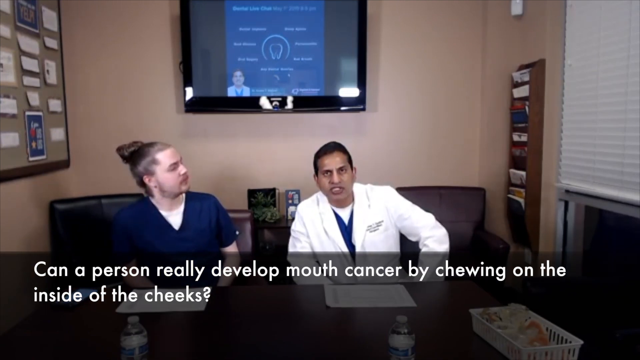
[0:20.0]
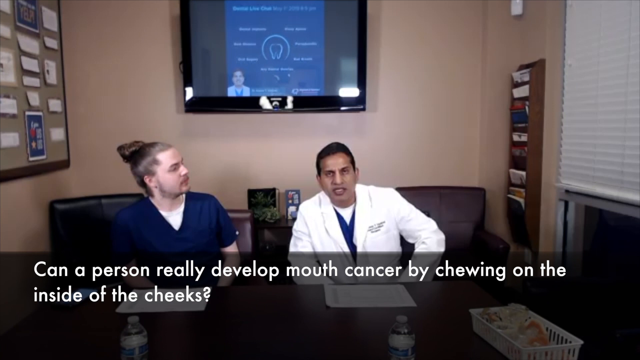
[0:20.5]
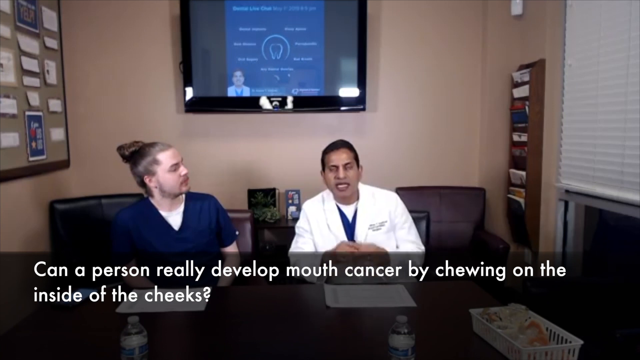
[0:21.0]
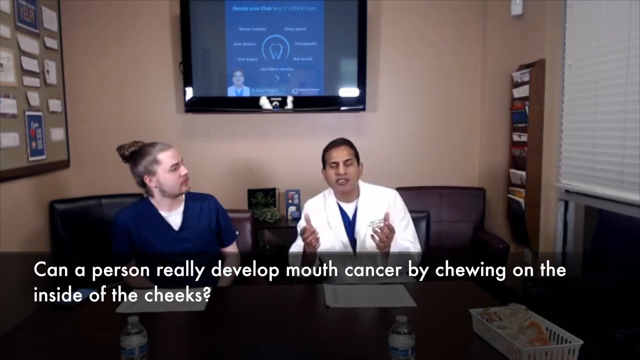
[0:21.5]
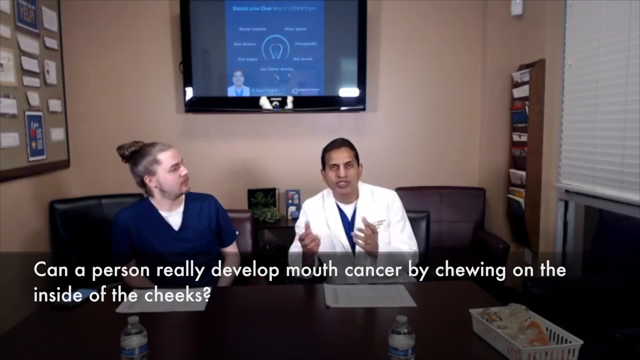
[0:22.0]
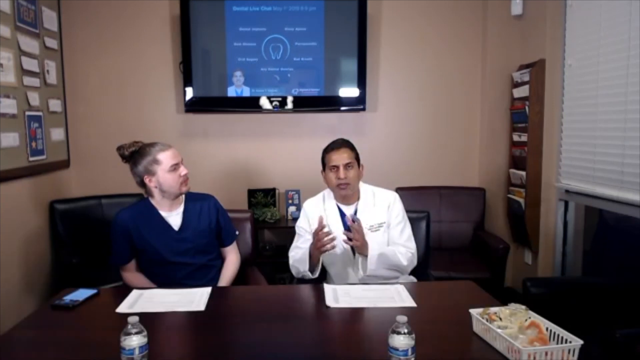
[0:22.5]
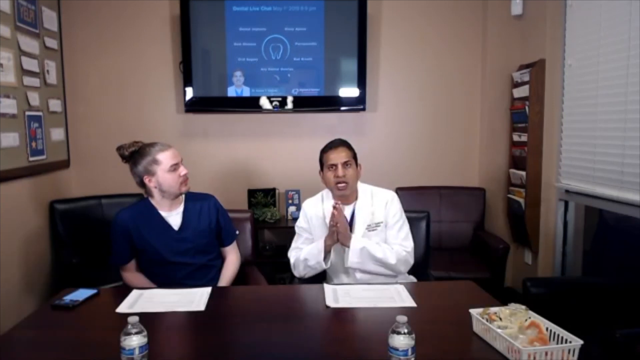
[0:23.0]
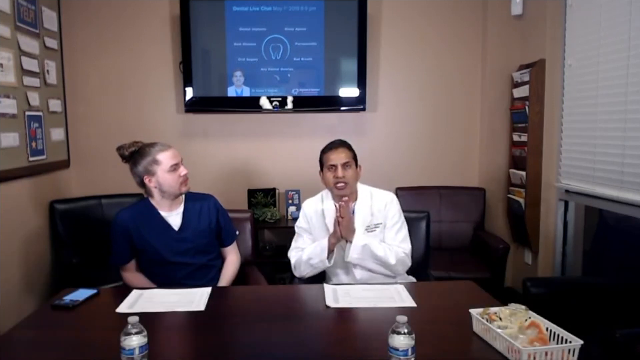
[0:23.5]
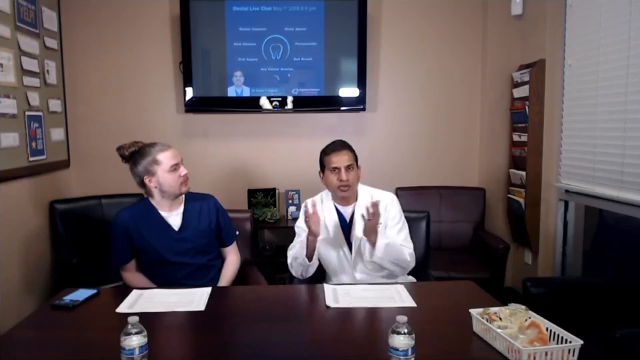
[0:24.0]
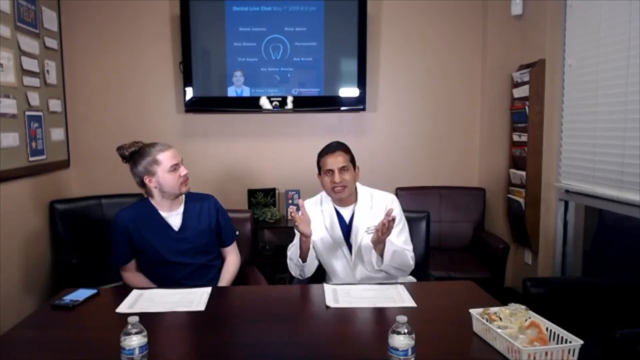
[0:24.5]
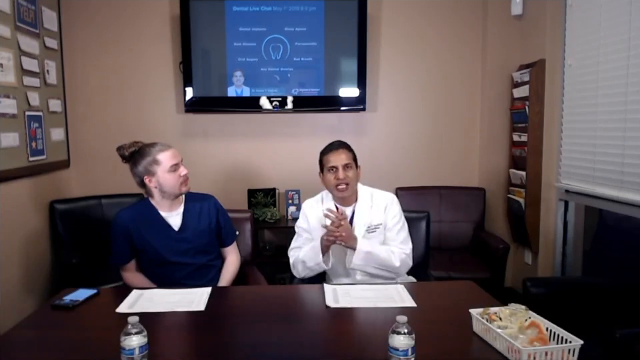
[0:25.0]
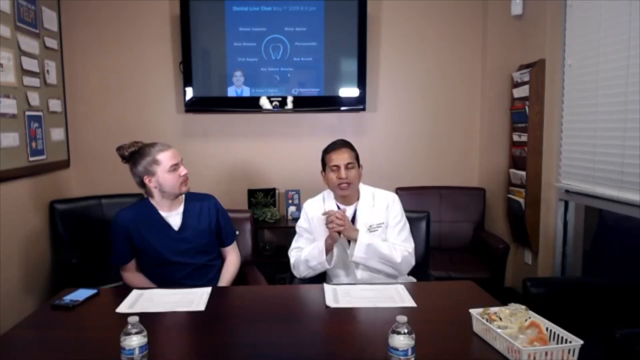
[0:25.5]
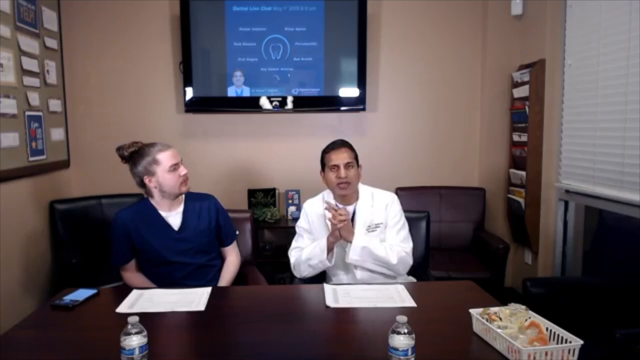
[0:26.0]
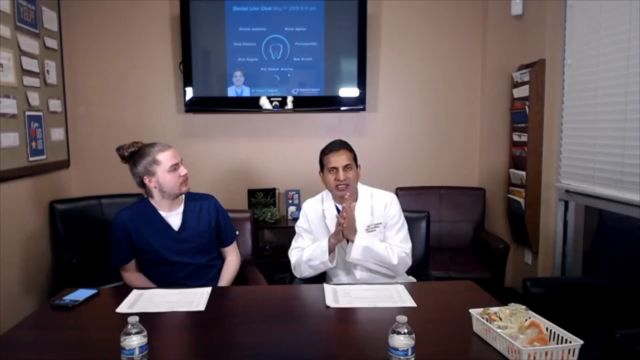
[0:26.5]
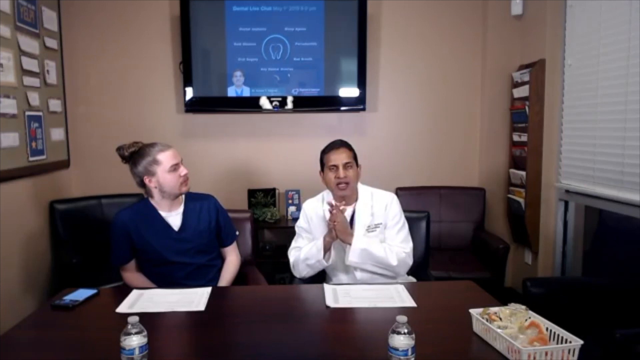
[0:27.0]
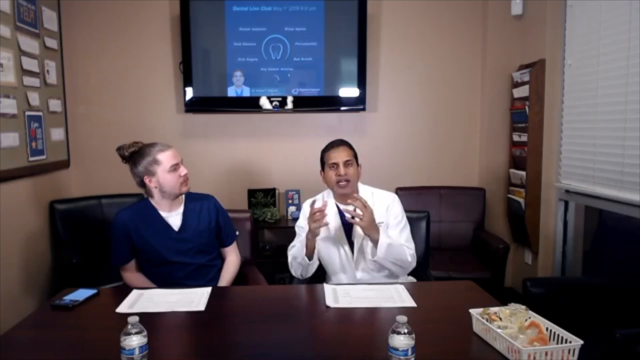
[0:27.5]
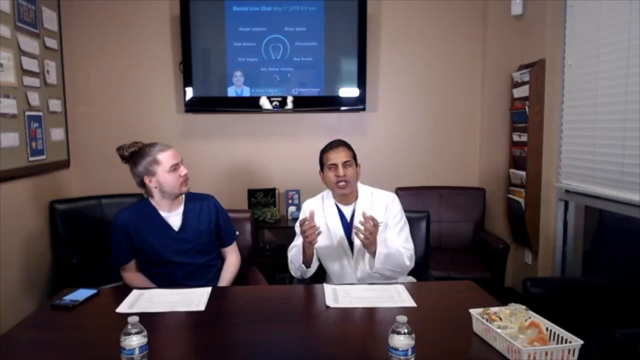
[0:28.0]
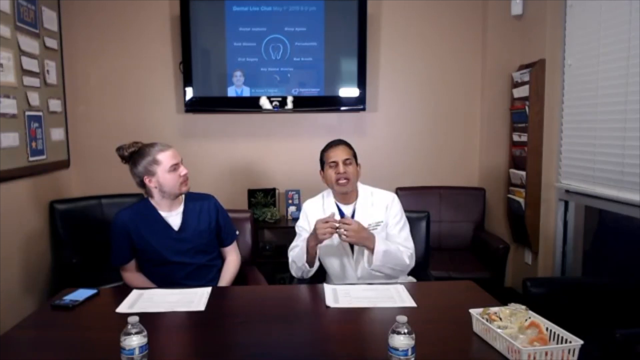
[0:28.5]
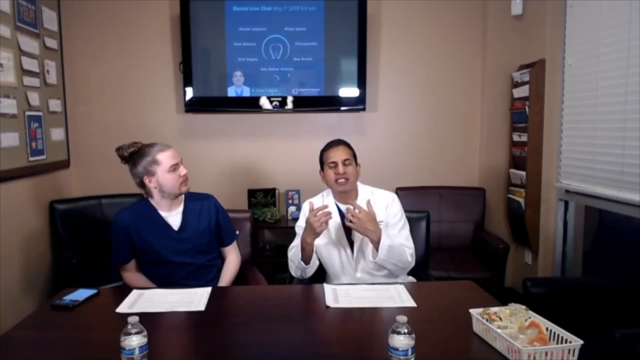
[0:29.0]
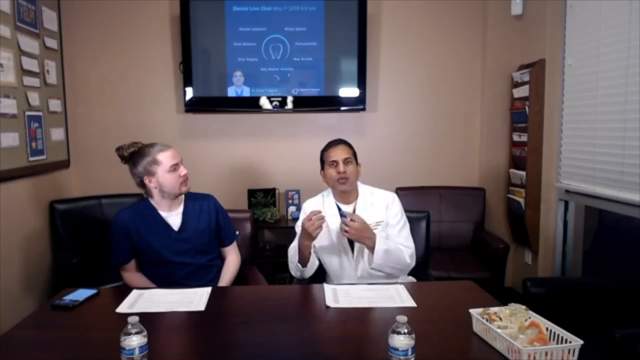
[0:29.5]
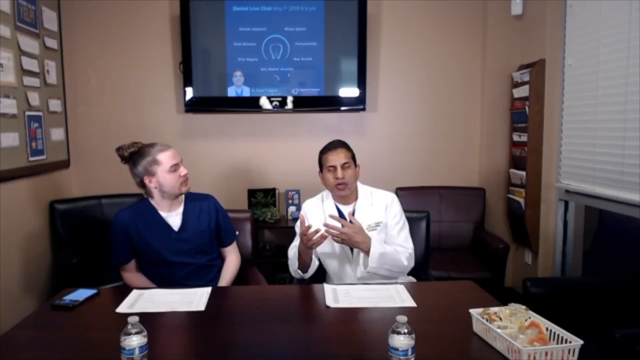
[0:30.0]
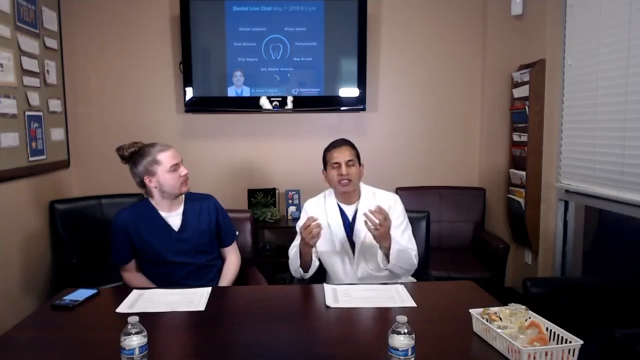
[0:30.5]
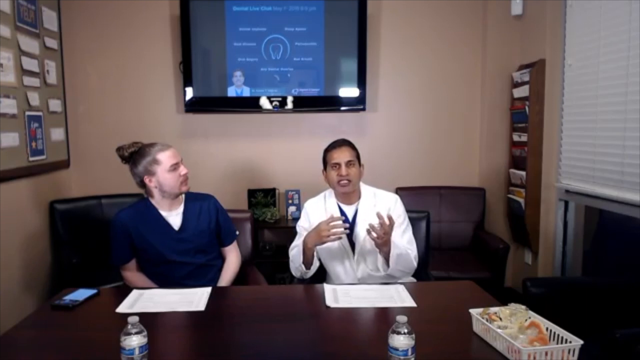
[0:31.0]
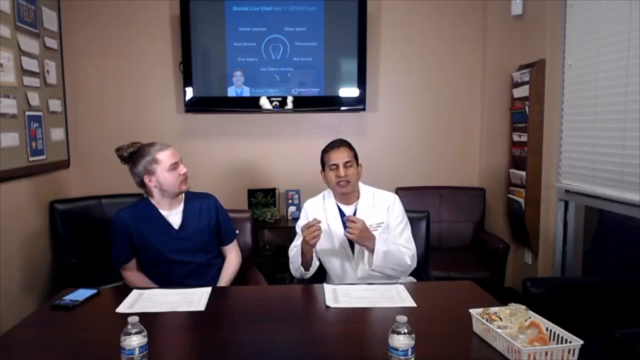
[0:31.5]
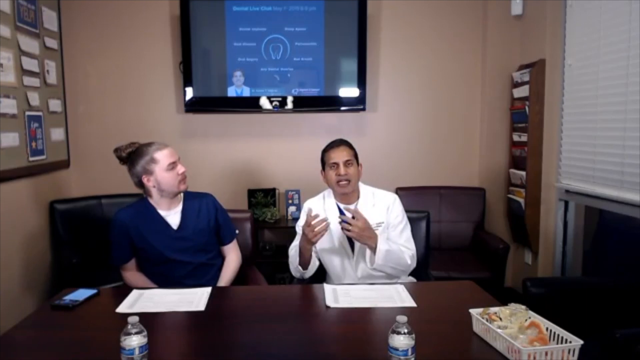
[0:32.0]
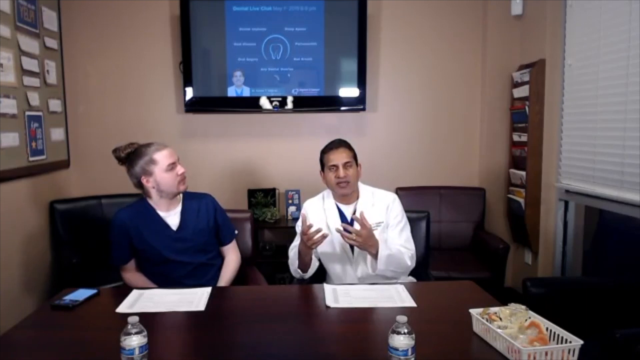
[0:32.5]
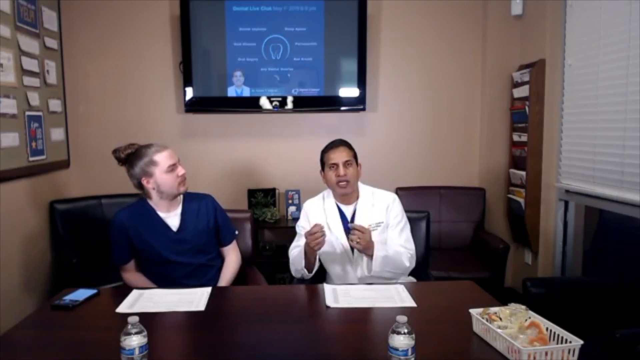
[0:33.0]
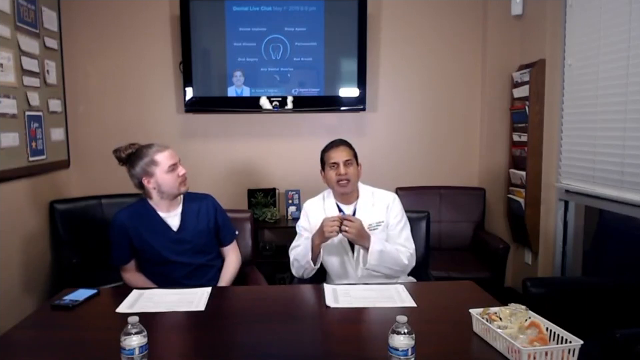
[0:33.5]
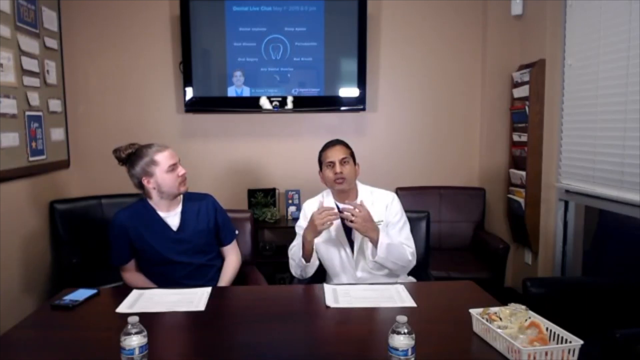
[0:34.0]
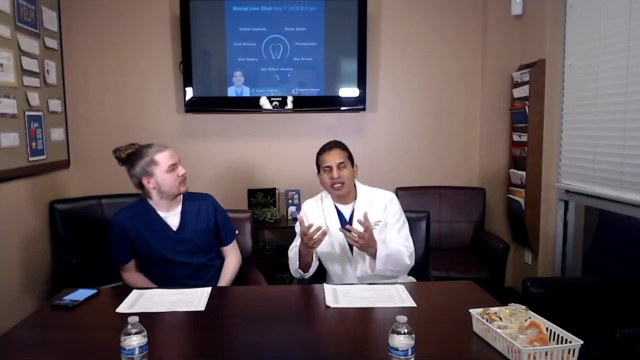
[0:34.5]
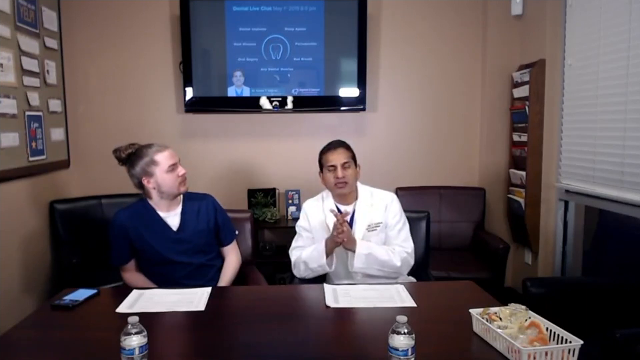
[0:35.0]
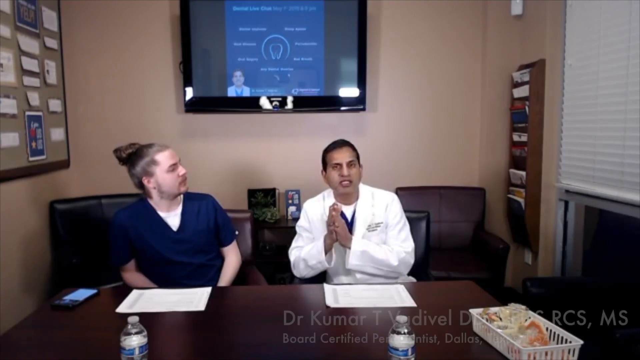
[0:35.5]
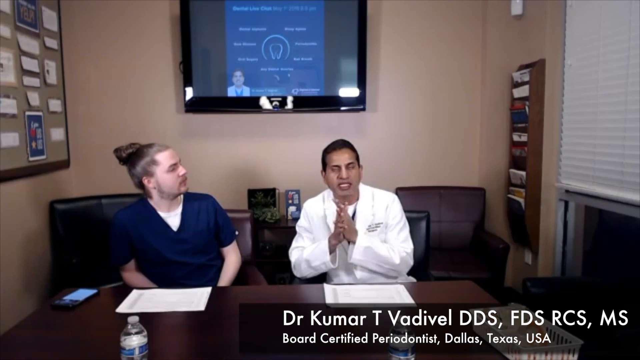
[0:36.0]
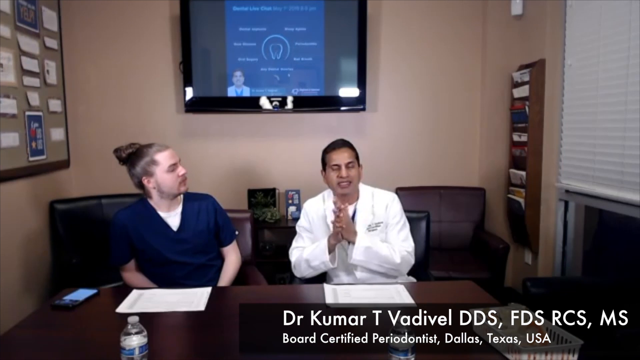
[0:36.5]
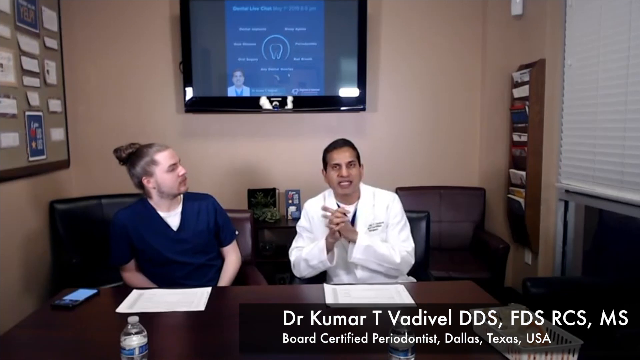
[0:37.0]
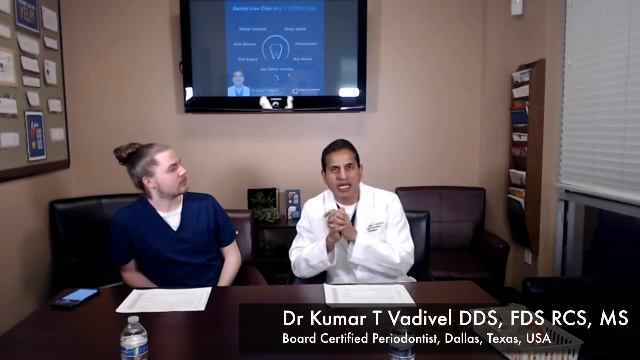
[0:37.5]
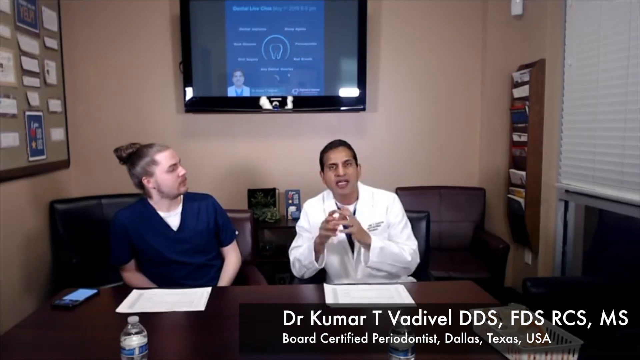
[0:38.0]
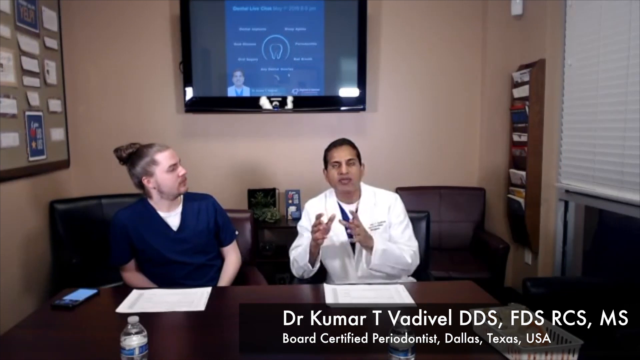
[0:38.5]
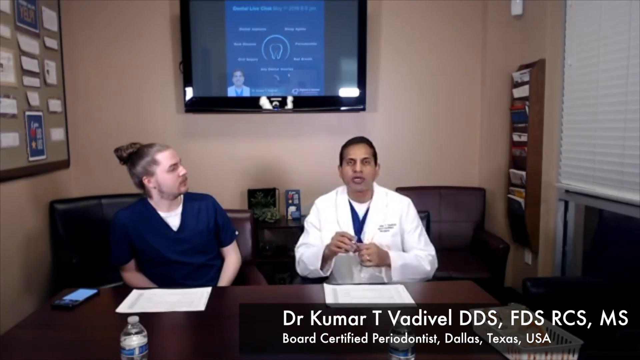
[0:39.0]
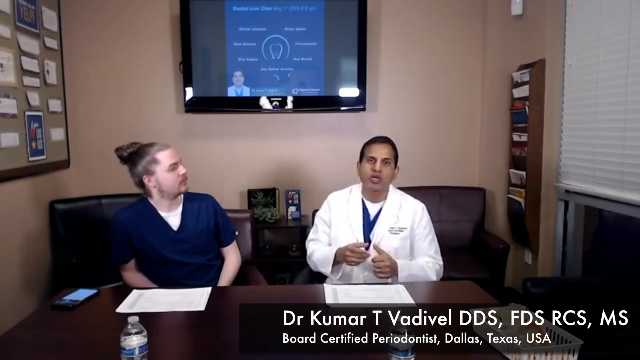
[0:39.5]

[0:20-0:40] Two men sit in an office talking. One man wears a doctor's smock, and the person to his left wears a dark blue scrub top and looks over at the doctor as the doctor talks. The doctor raises his hands in front of him, clasping his fingers together and then bringing his hands apart in various gestures that add emphasis to his answer. His name eventually appears in the bottom right corner of the screen along with his credentials, including DDS, FDS, RCS, and MS. The on-screen question reads "can the person really develop mouth cancer by chewing on the inside of the cheeks?" A TV is mounted on the back wall; its screen is on and appears to show an image of the doctor in its lower left corner and some other information on a blue banner in the middle.